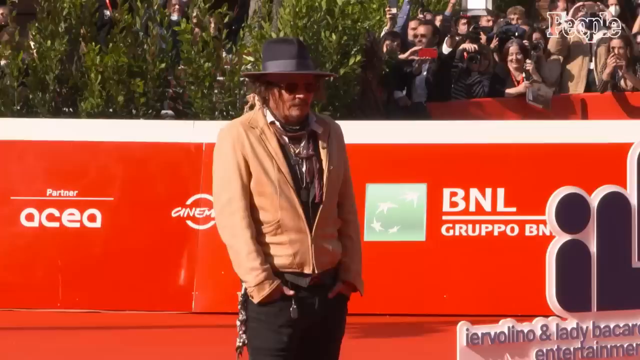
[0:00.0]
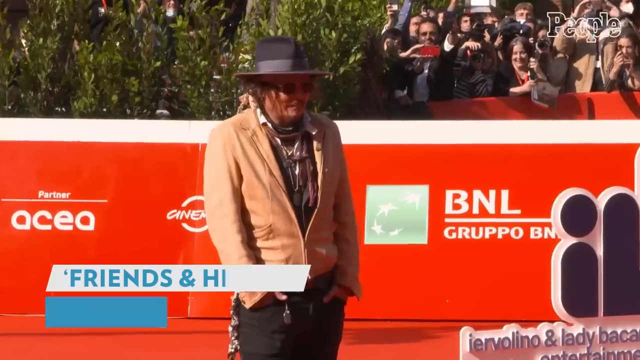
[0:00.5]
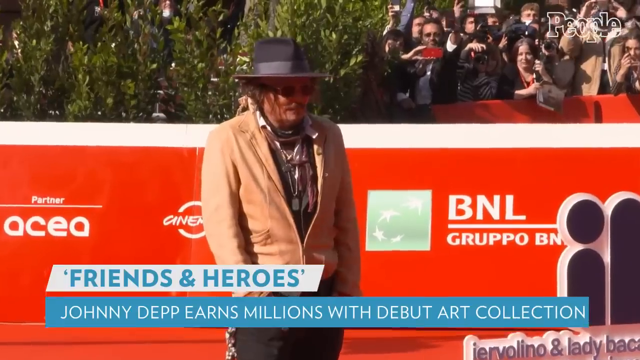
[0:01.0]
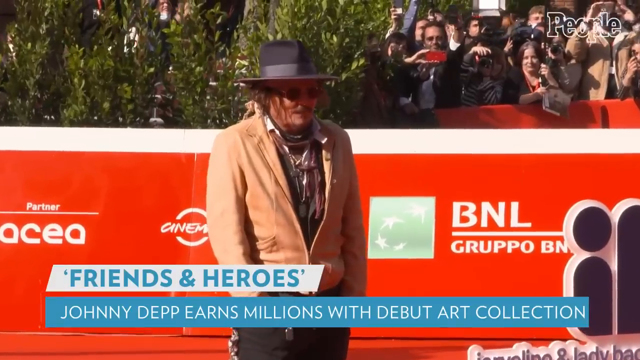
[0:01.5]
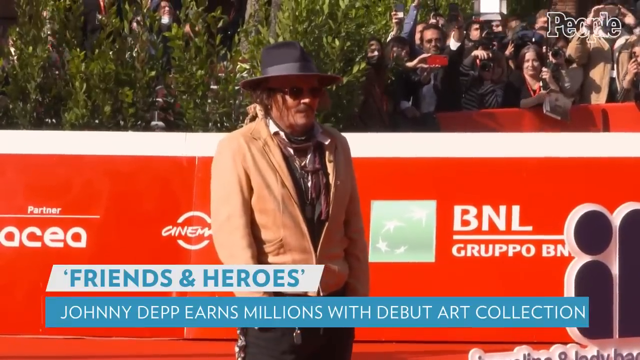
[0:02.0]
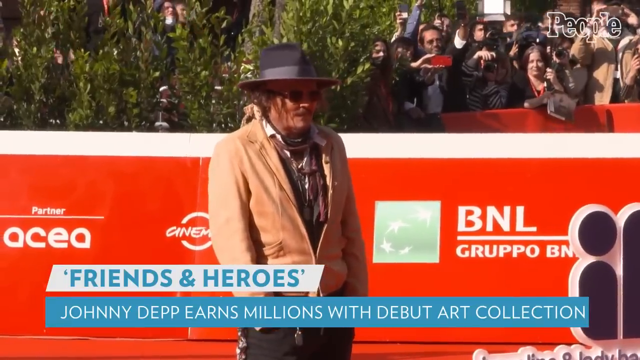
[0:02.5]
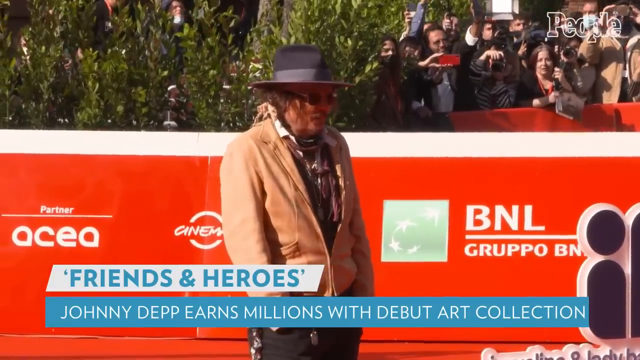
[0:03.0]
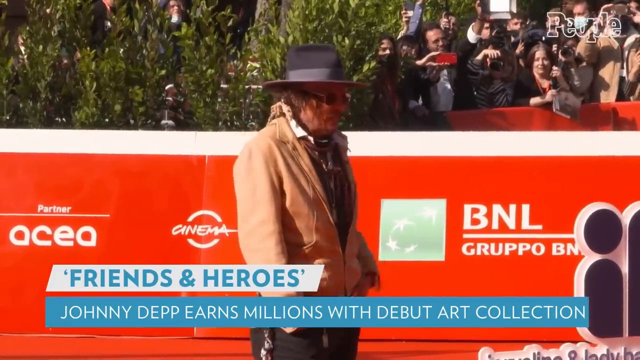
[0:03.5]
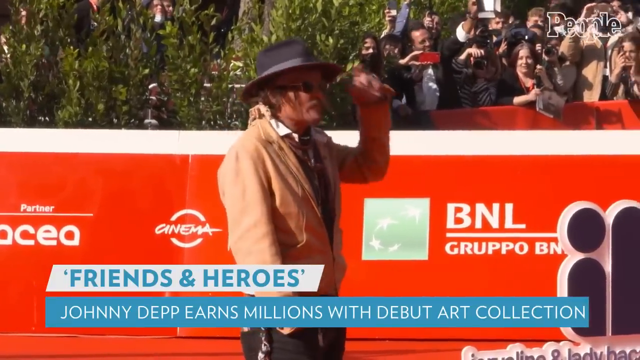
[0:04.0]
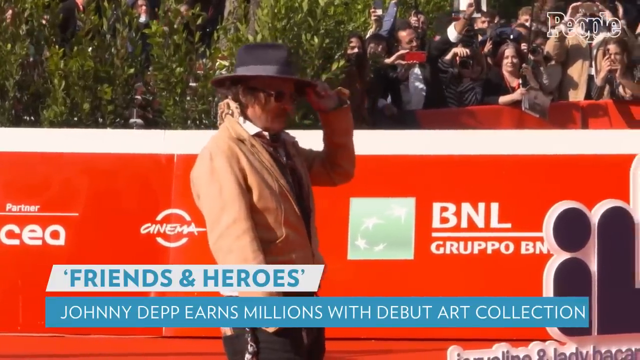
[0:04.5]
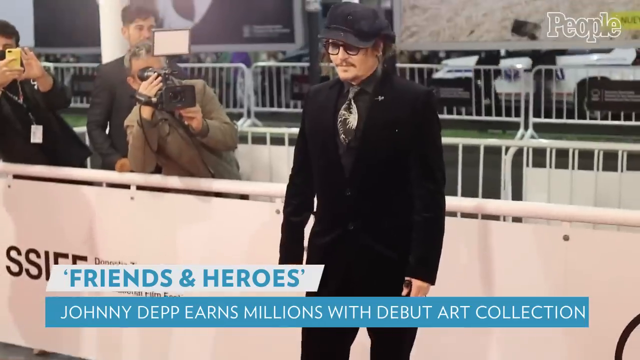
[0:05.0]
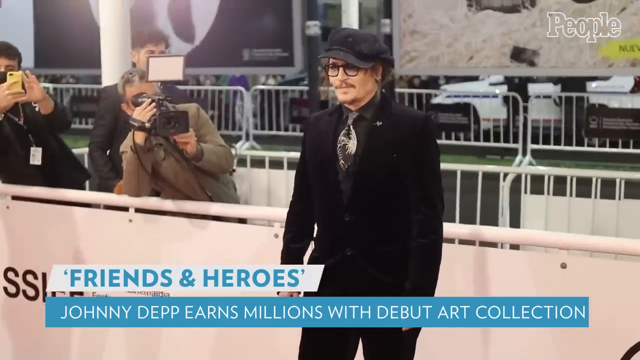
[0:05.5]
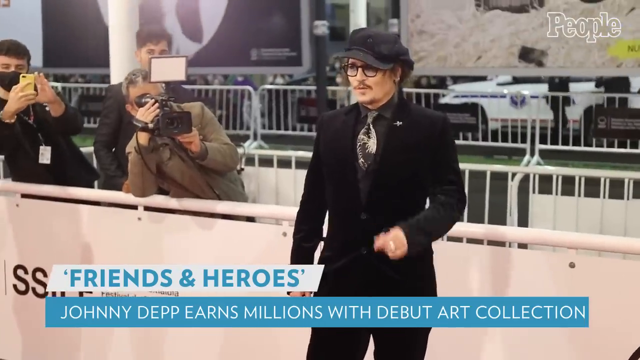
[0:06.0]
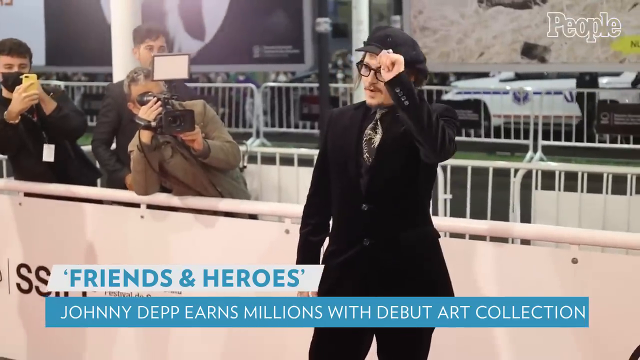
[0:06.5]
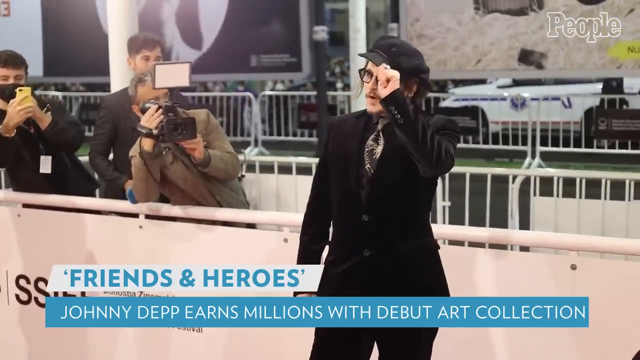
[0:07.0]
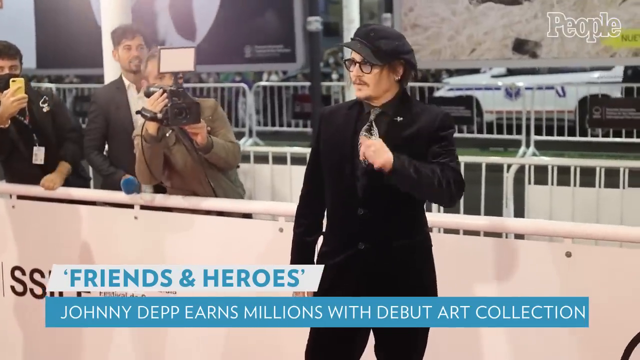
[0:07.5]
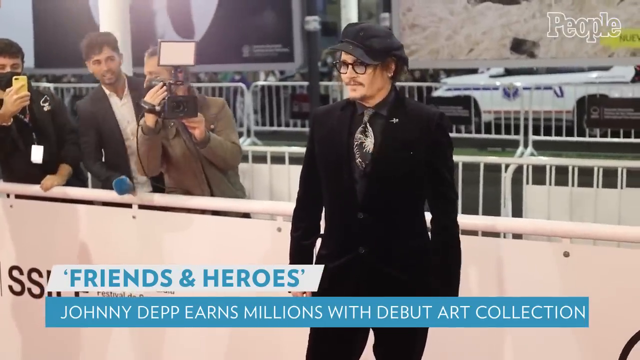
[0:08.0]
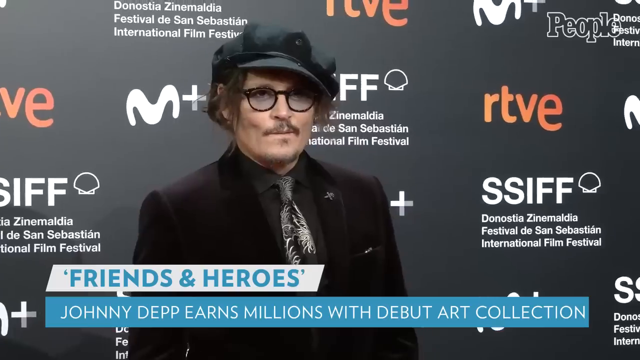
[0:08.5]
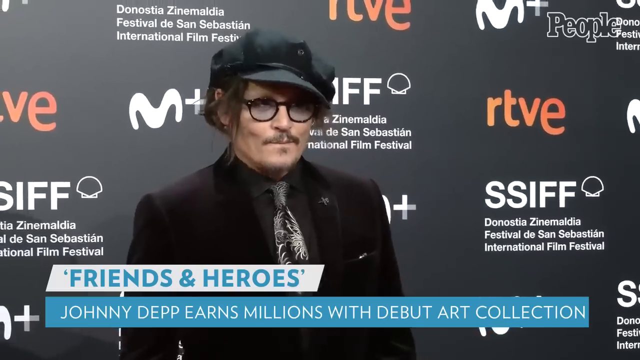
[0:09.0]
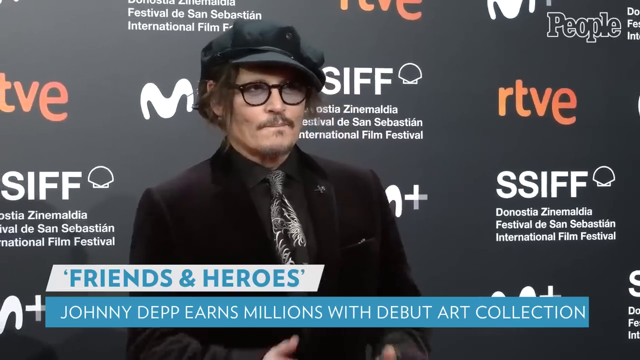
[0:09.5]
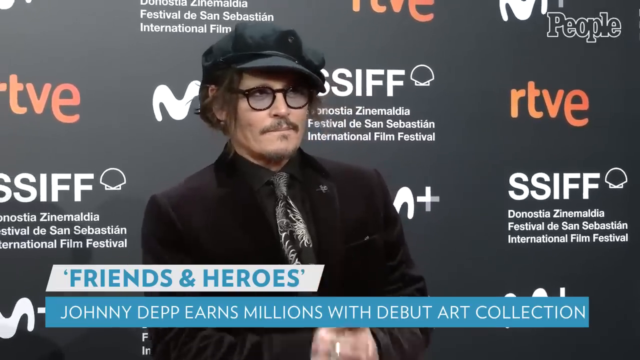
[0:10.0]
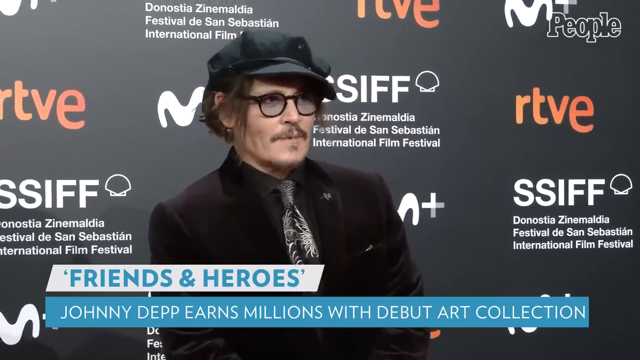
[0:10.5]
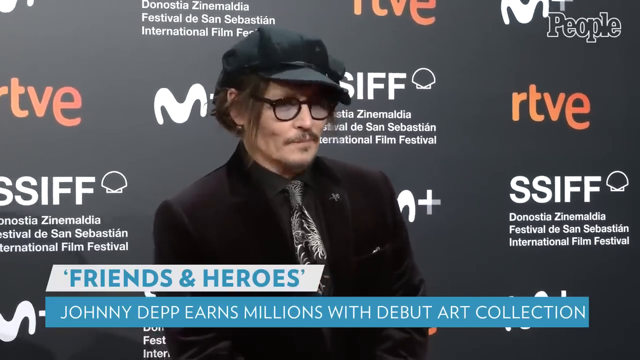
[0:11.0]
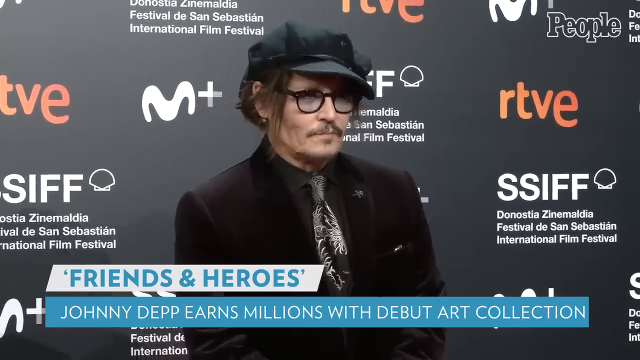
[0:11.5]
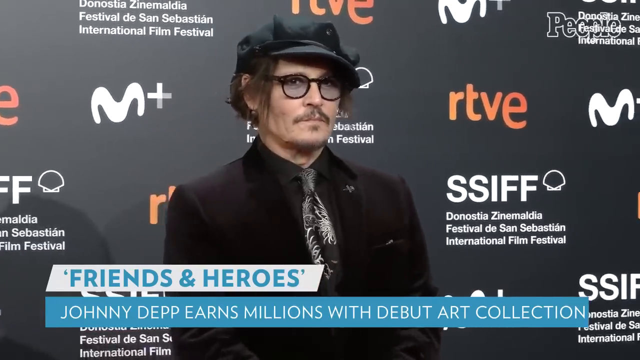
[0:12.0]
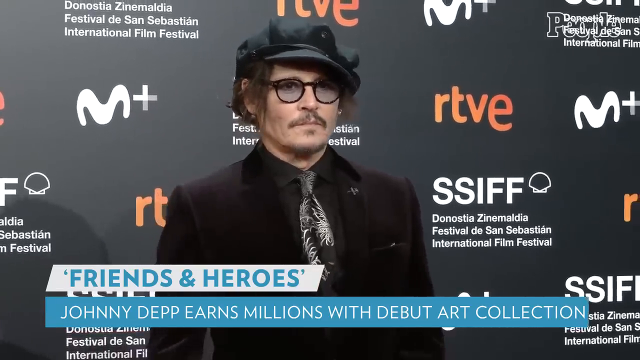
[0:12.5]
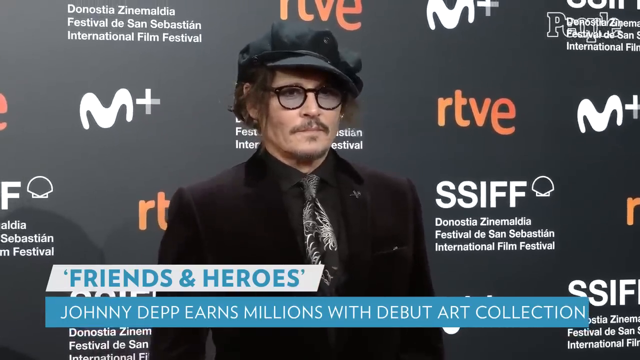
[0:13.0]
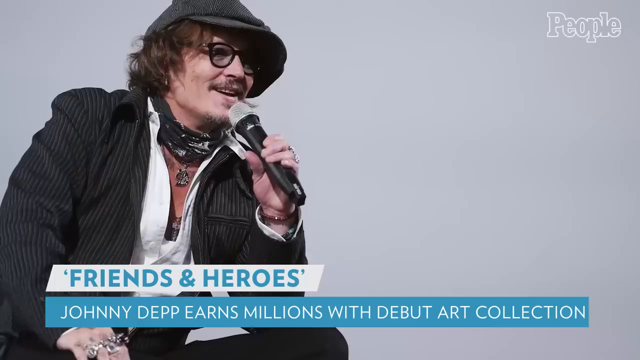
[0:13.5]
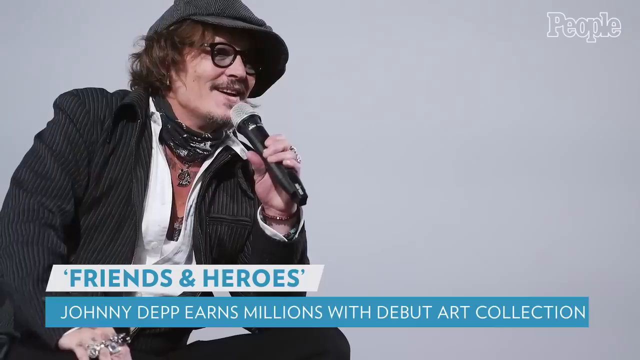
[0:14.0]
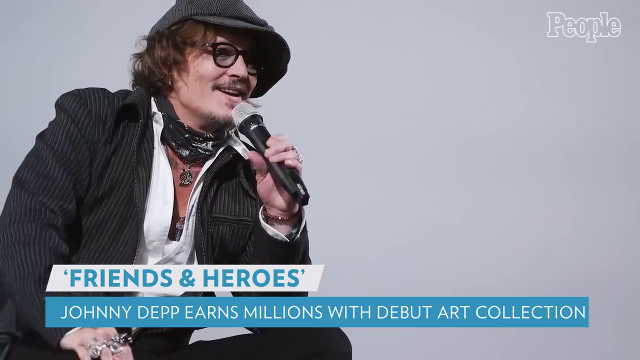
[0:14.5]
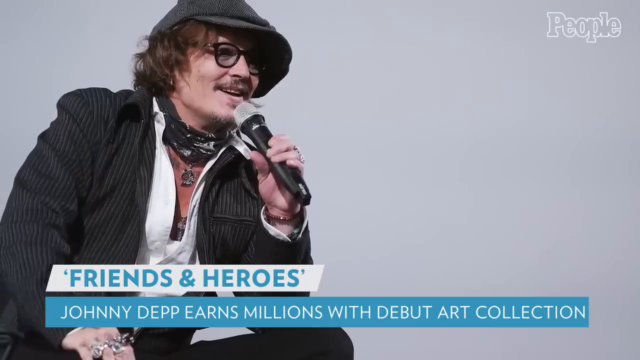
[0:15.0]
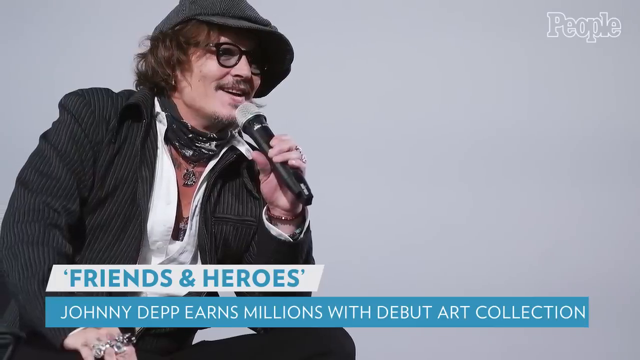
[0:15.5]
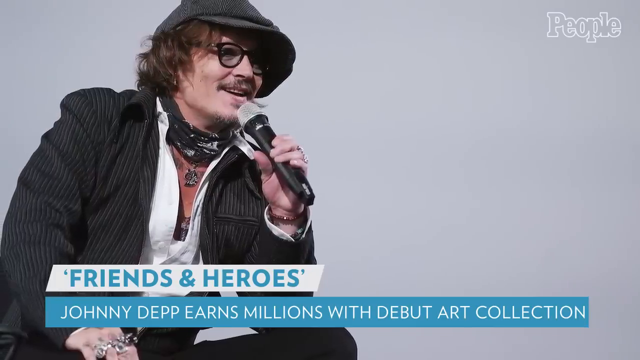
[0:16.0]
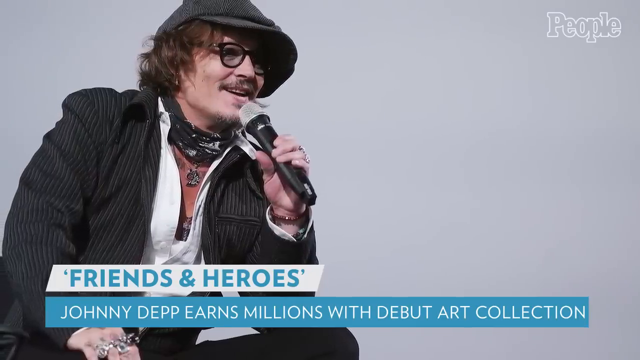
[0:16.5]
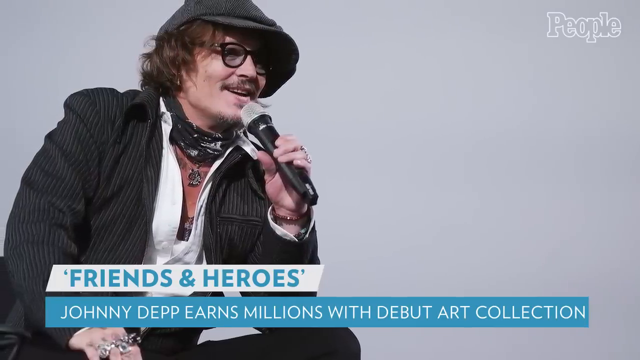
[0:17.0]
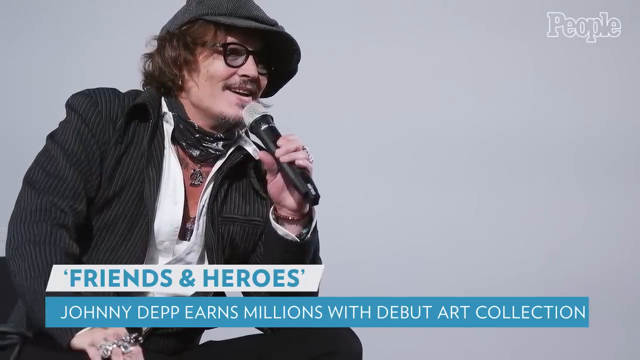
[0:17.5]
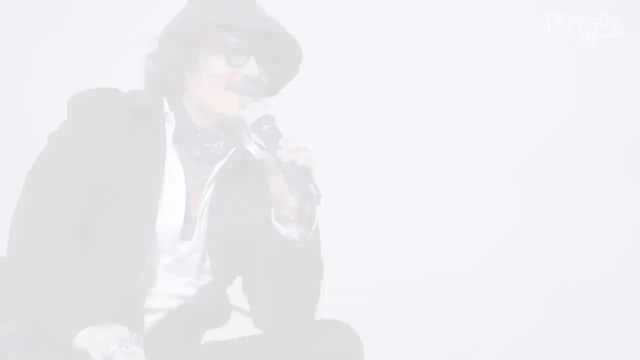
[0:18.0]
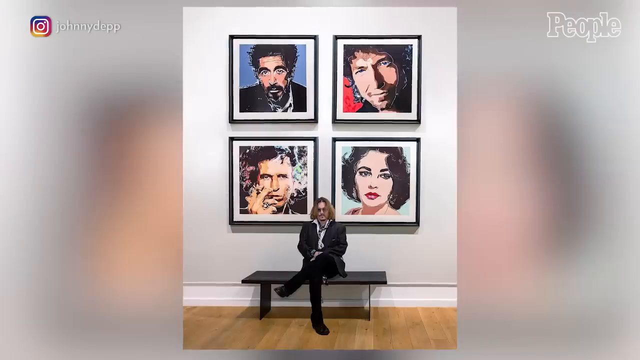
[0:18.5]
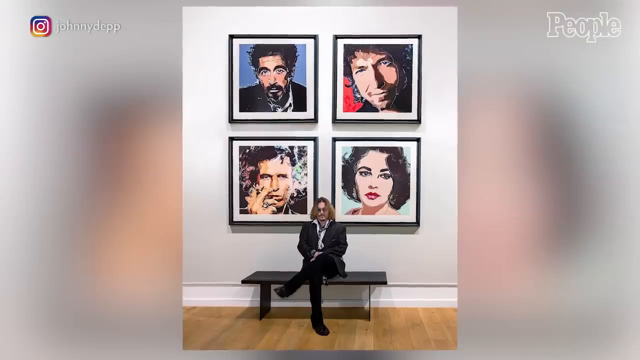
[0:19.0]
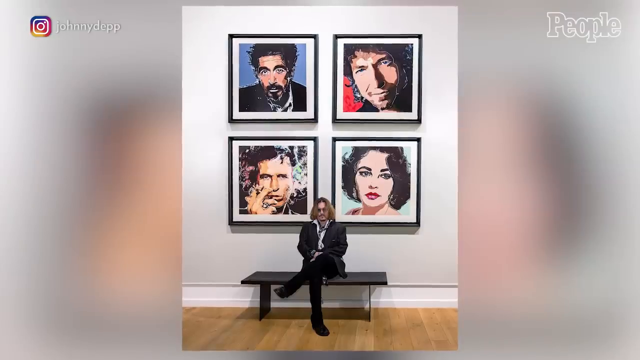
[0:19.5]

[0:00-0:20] A man stands in front of an orange banner that has multiple words and small pictures on it. He wears a light beige jacket, a black hat and sunglasses. People stand behind the orange banner with cameras and what looks to possibly be phones. At the bottom, a blue label reads "Johnny Depp Earns Millions with Debut Art Collection" in white writing, and above it a white label with blue writing reads "Friends and Heroes." Another shot, with the same labels below, shows what appears to be the same man in a black suit, a black hat and sunglasses, with a white banner behind him and people behind the banner holding cameras and phones. Next, the same man, in the same black suit, stands in front of a black board with different writing on it. Then a man who looks like the same man wears a black jacket and holds a microphone, with a white screen behind him. Finally, the same man sits on a bench in a black suit, with photographs of different people behind him.